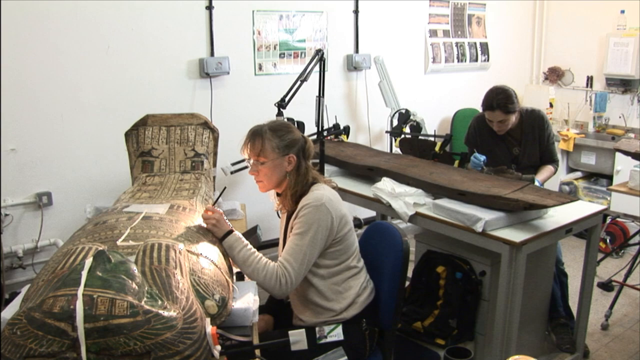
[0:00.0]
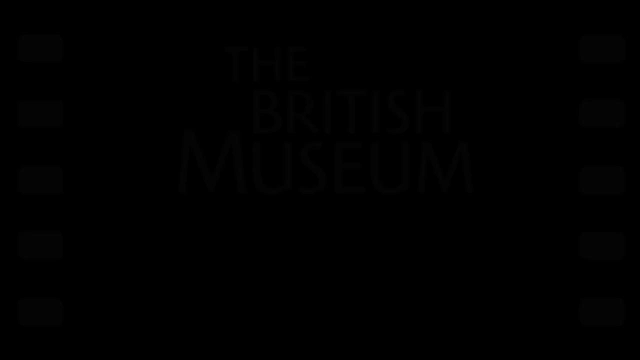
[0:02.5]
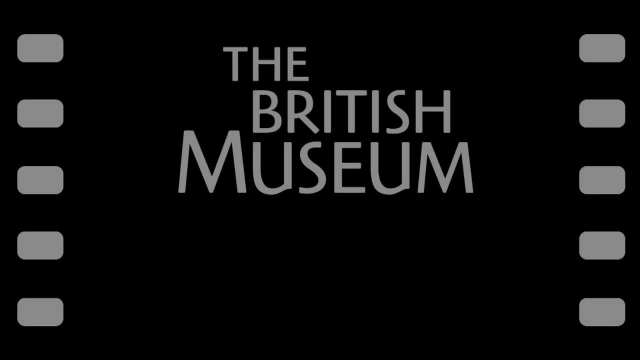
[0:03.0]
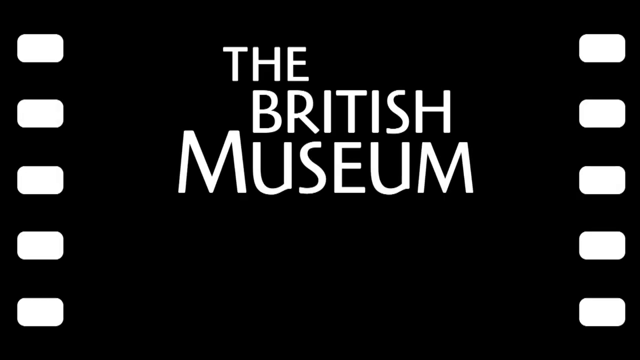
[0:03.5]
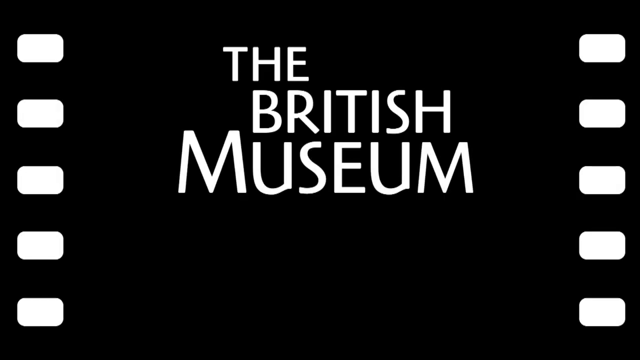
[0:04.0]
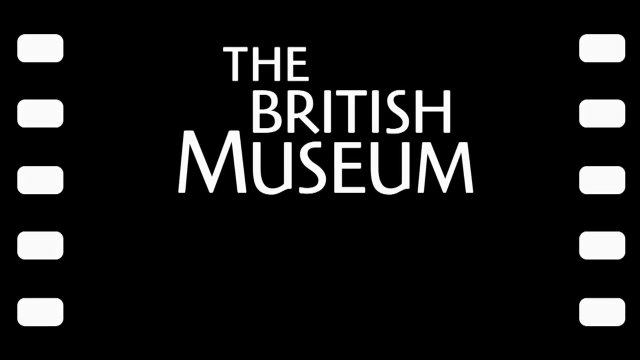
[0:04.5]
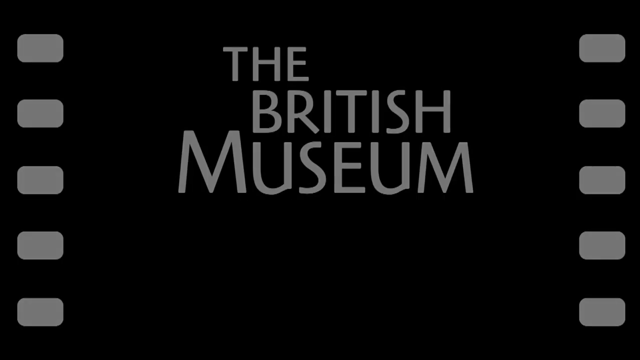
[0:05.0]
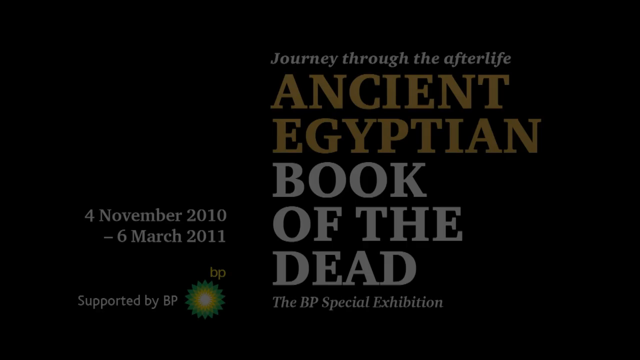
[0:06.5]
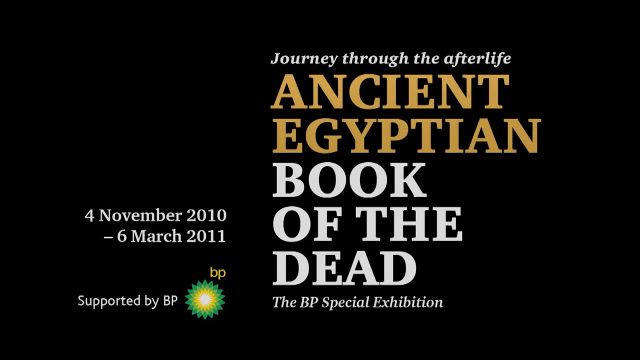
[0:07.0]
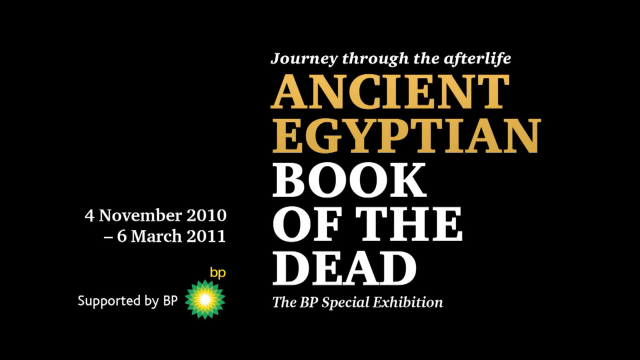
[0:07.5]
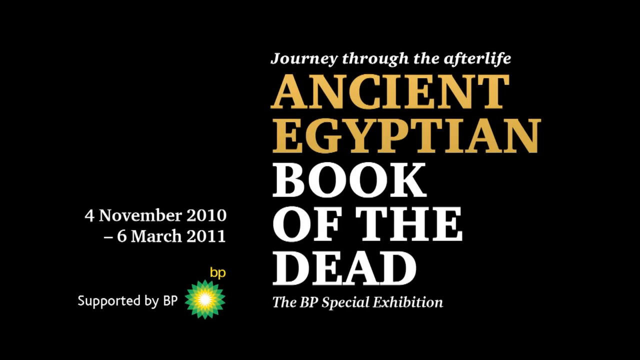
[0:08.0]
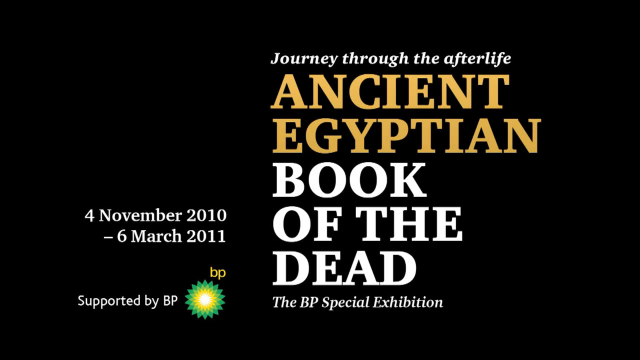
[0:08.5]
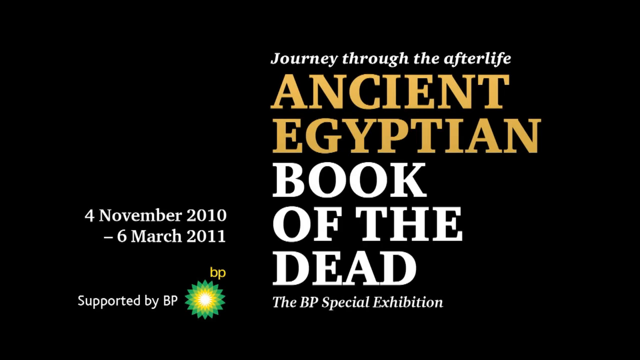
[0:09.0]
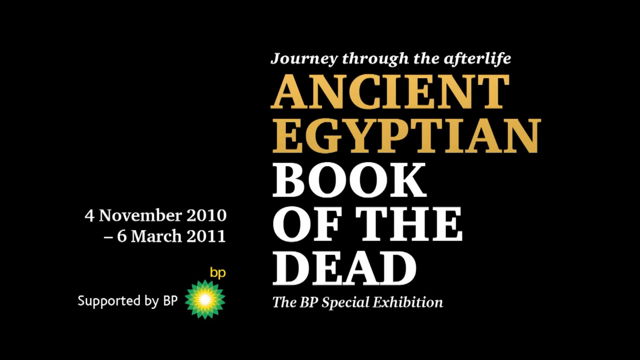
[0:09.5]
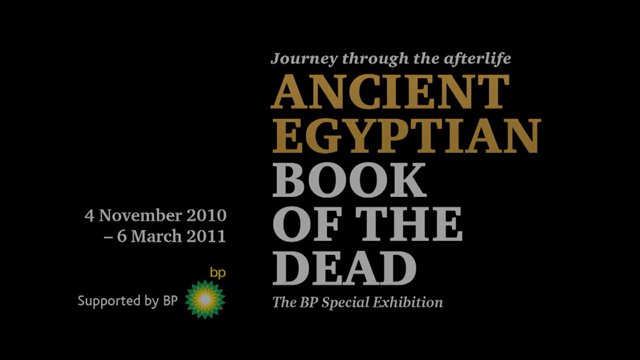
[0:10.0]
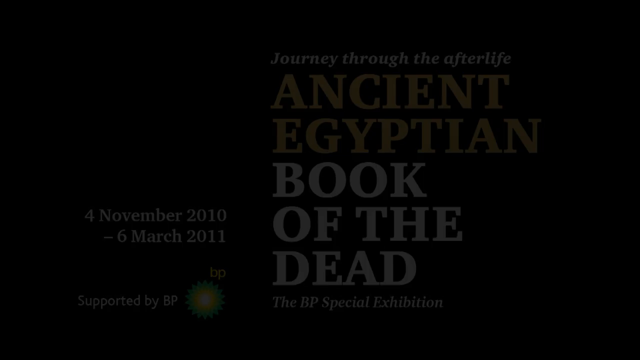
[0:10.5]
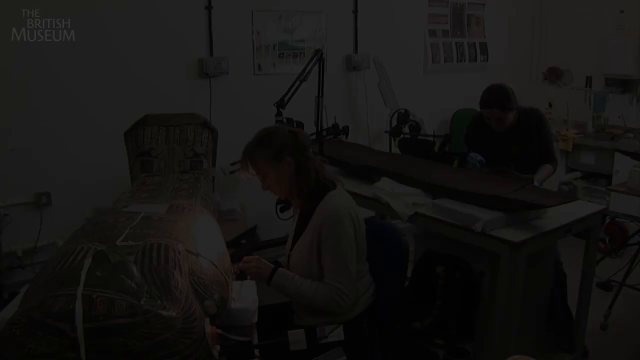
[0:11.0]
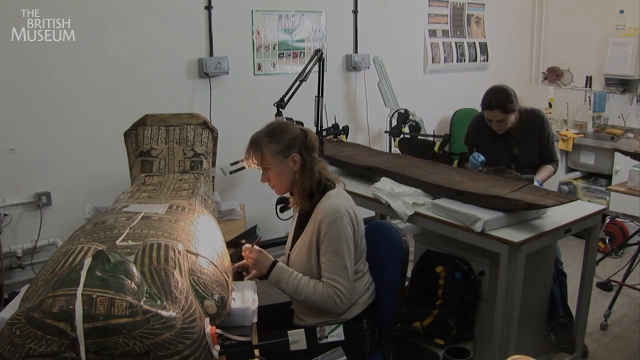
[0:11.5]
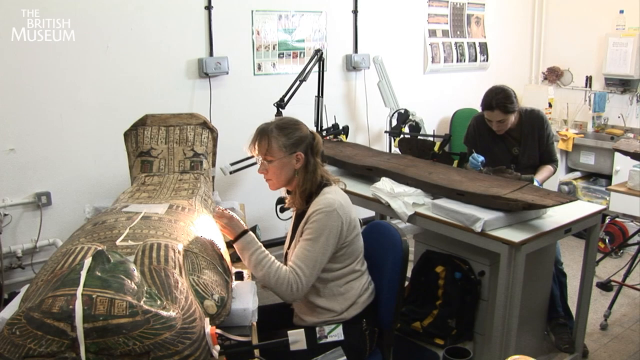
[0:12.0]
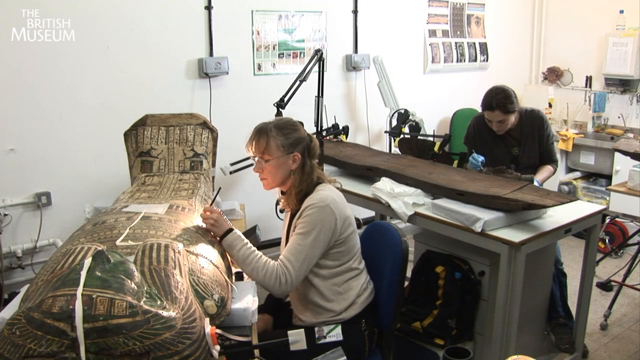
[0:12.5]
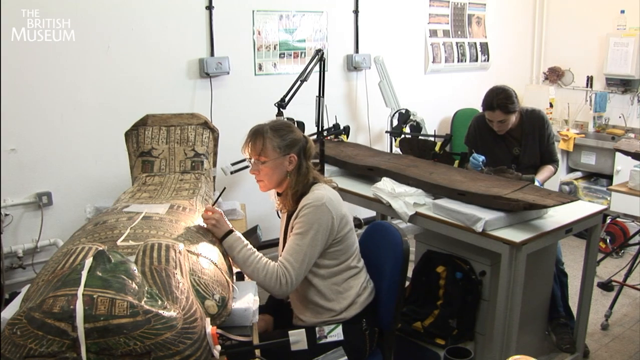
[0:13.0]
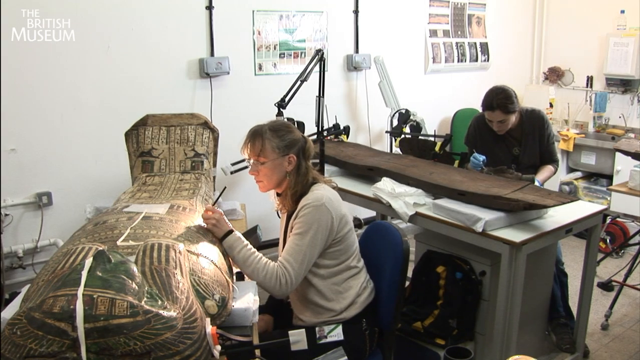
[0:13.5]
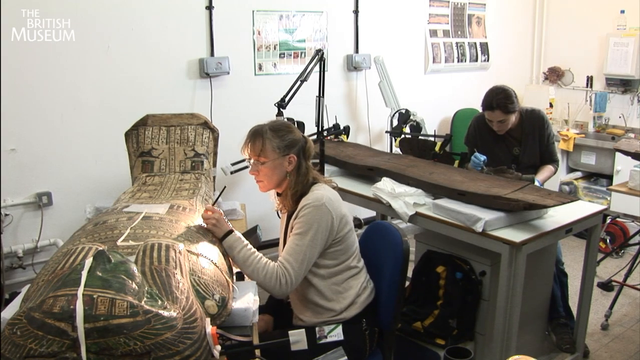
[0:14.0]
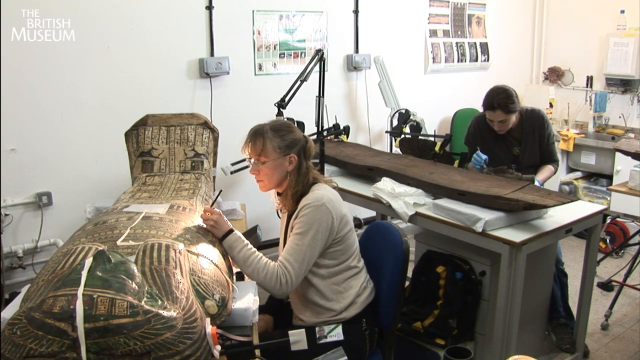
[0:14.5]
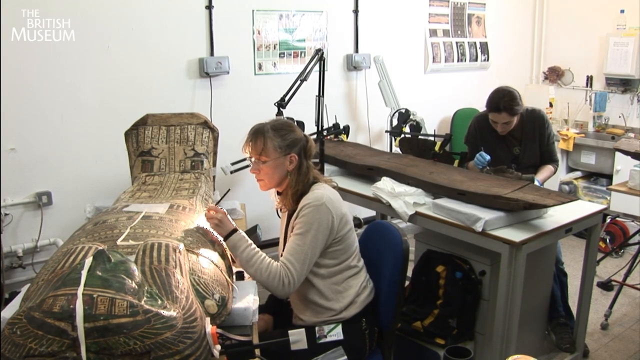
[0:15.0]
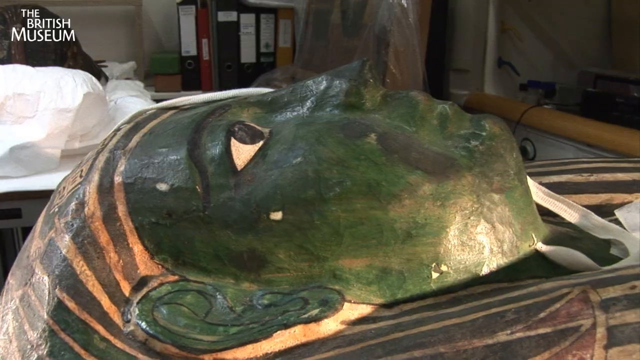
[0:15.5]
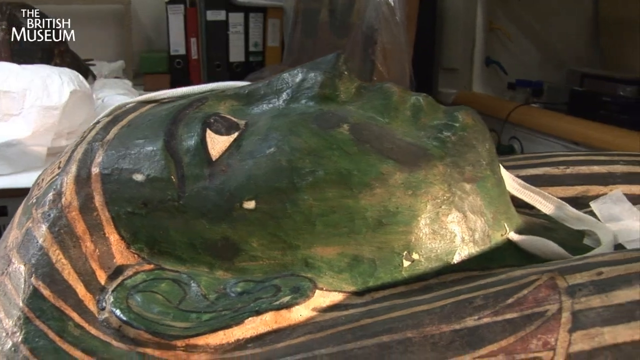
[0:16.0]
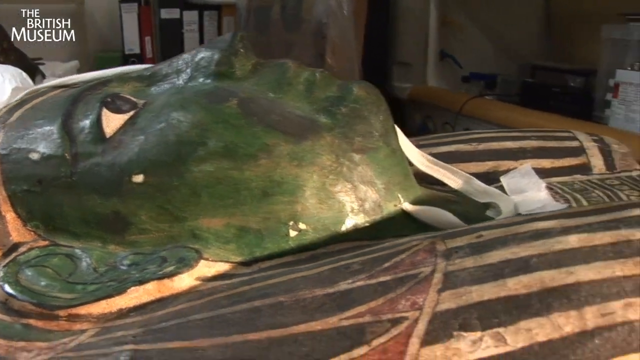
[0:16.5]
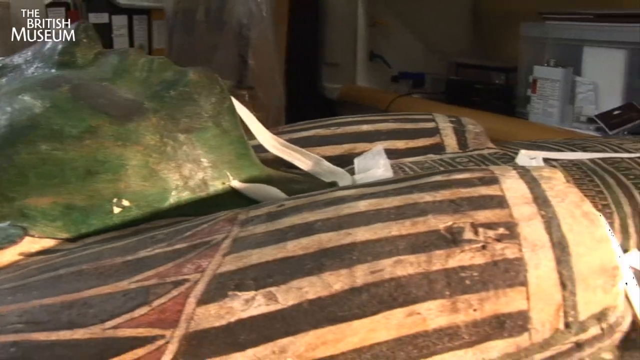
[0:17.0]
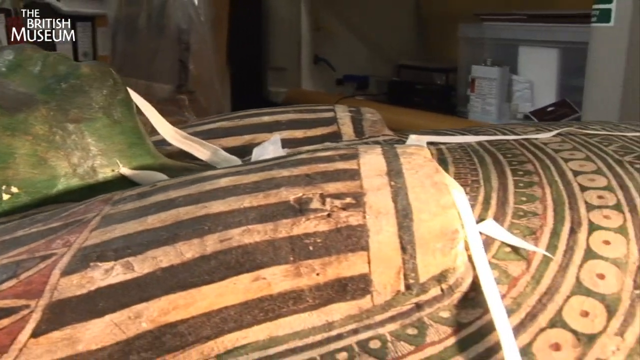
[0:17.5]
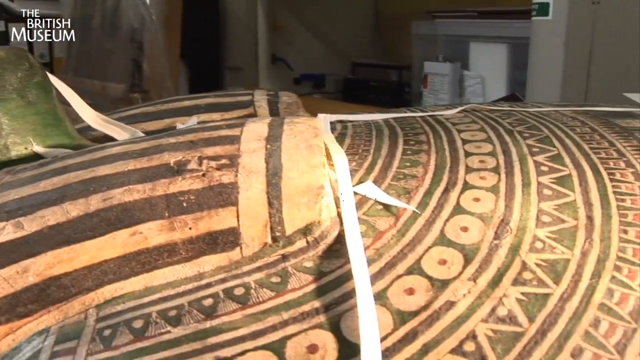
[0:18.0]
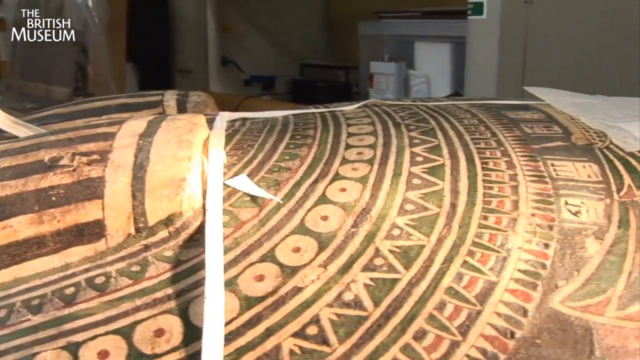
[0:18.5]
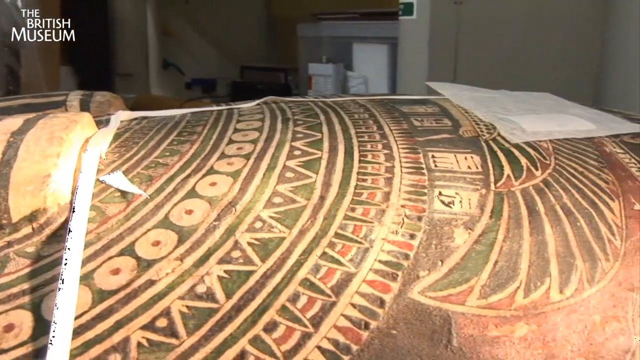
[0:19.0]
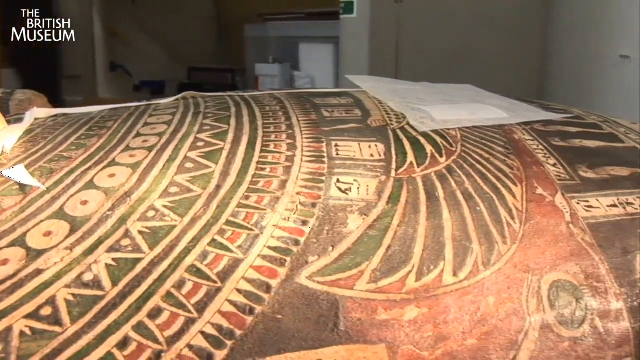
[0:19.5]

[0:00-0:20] A coffin shaped like a pharaoh, possibly King Tut, is decorated in all types of colors. A woman at a table is doing some type of repair work to the coffin. A man at another table is working on something that appears to be a piece of wood. All kinds of things surround them in the workshop, apparently things used to make repairs, and lamps are attached to the work tables to help them see better.